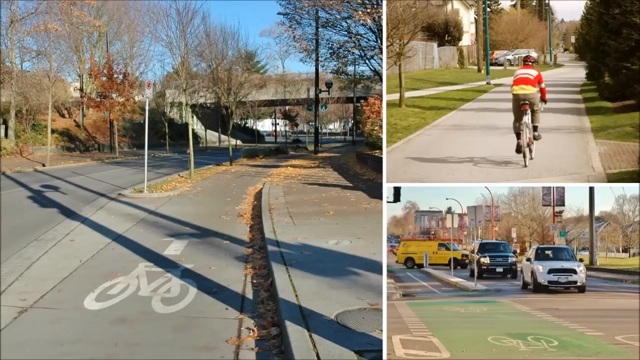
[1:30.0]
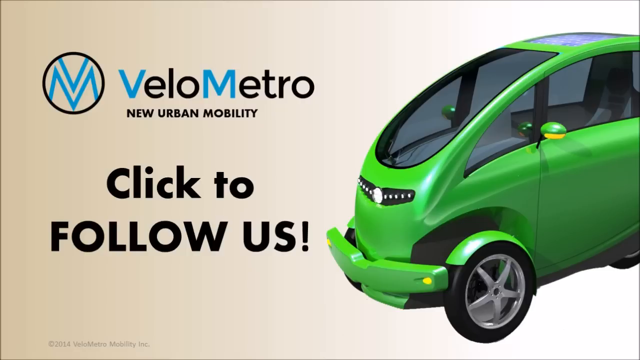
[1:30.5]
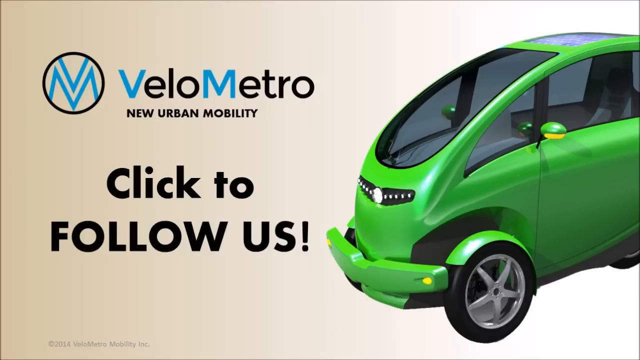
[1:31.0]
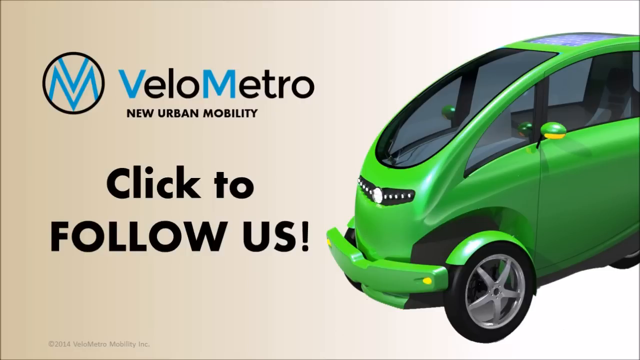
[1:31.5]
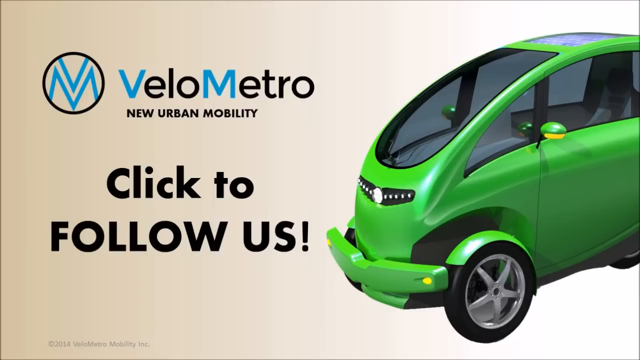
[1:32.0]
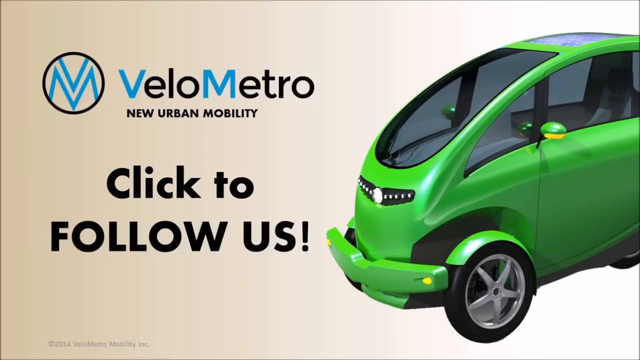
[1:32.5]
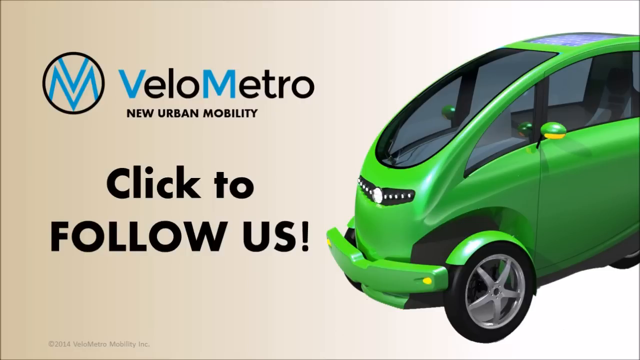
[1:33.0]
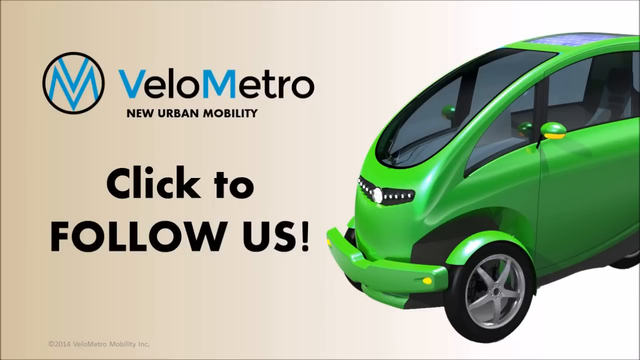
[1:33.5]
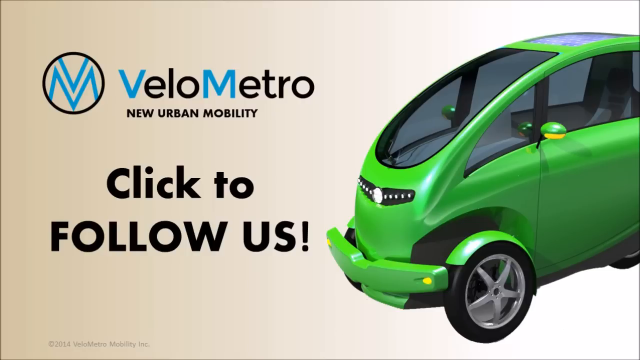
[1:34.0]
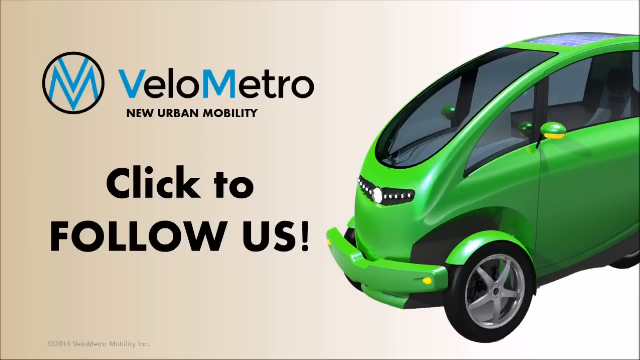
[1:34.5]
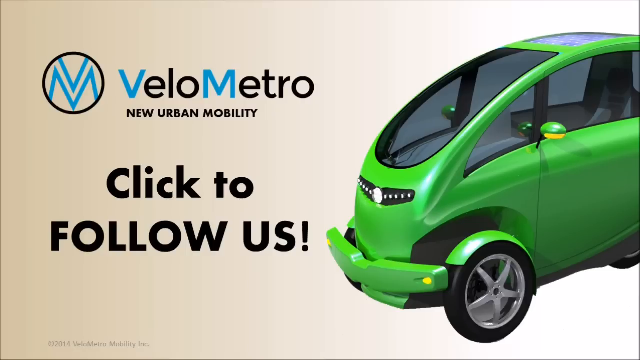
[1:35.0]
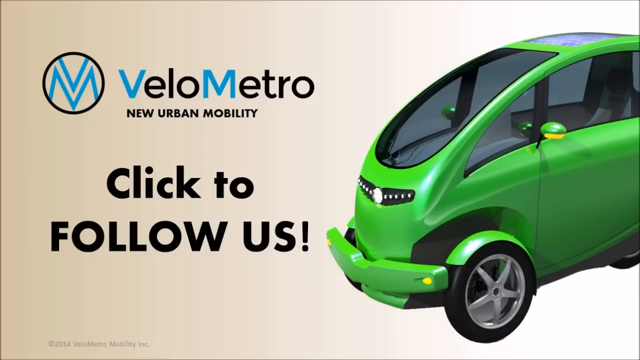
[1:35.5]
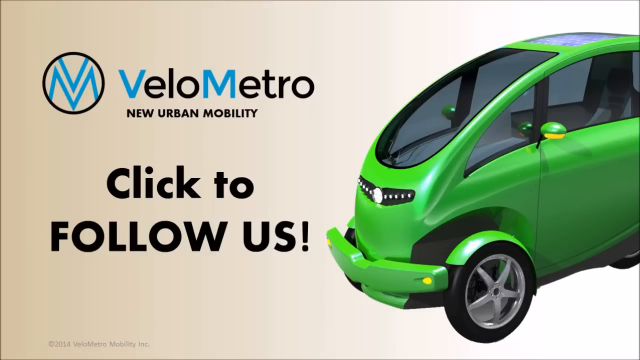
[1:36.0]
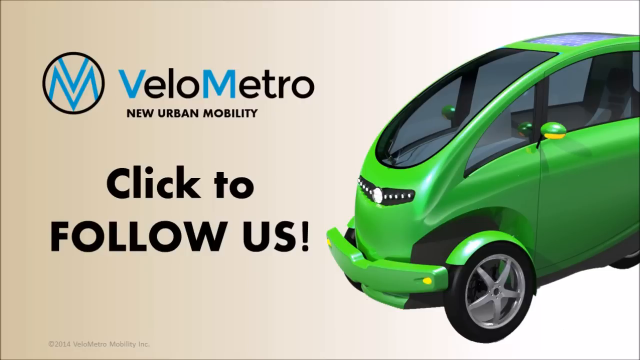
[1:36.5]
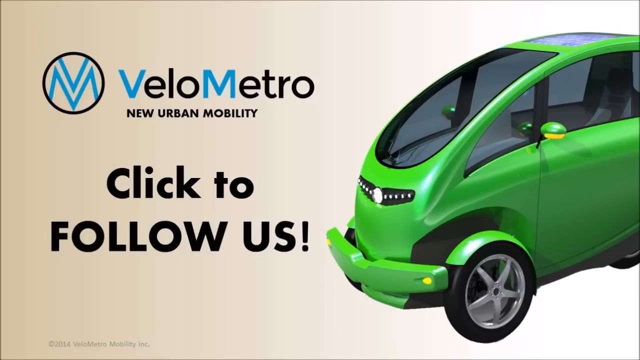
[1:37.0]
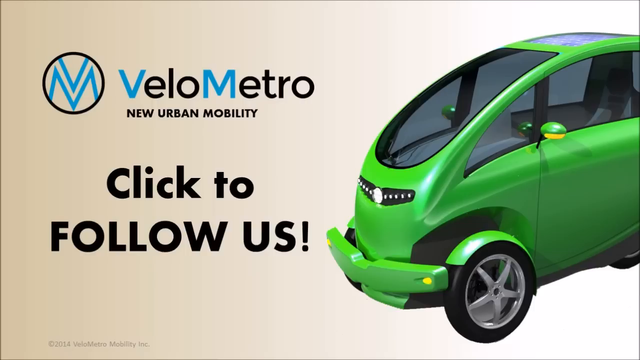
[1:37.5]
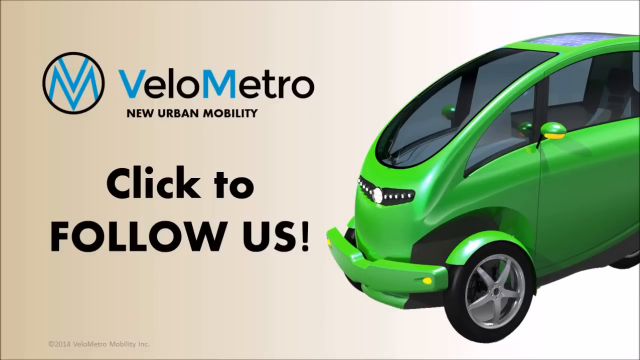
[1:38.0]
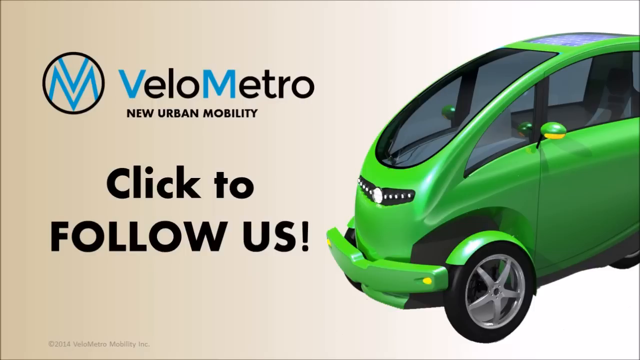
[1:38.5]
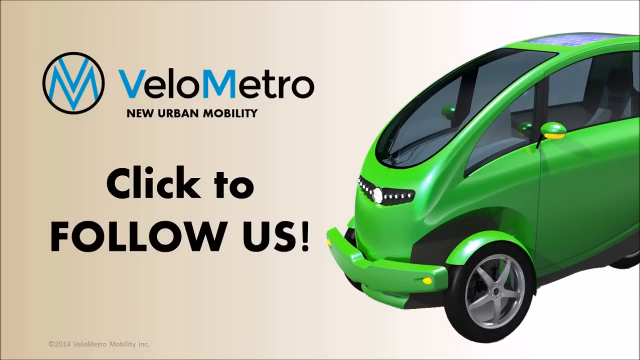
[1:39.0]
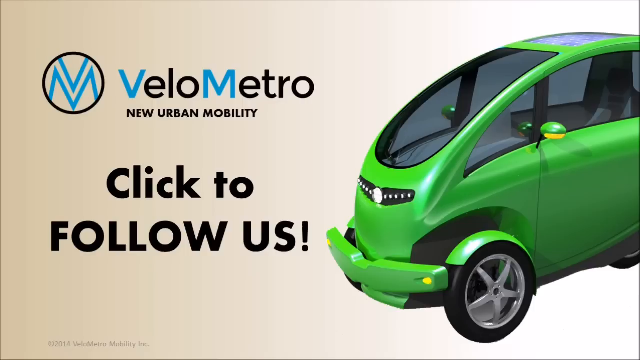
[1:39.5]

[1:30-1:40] A split screen shows a city street in the fall with a very big bike lane; on the other side of the screen is a biker, and underneath that are some cars driving in the city. The next screen reads "Velo Metro, new urban mobility" and has a symbol of a blue V on top of a blue M in a black circle. Text reads "click to FOLLOW US!" with "follow us" in all caps. A picture shows the vehicle: bright neon green, very small, for one person, with one tire in the back and two in the front. The bumper is the same color as the car. It has little windows and little mirrors on either side. The windshield is very narrow, very long and extremely curved, going right back over the driver's head.